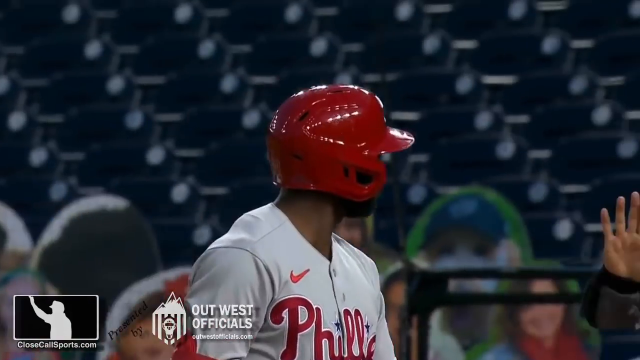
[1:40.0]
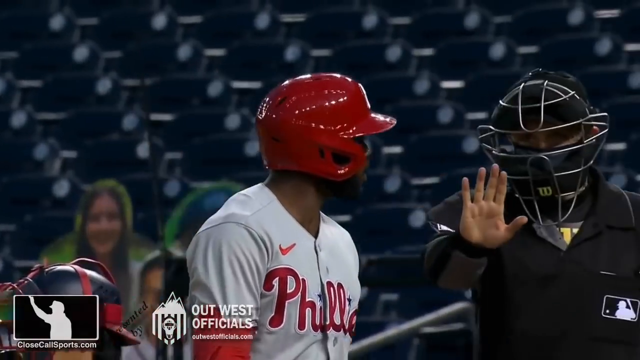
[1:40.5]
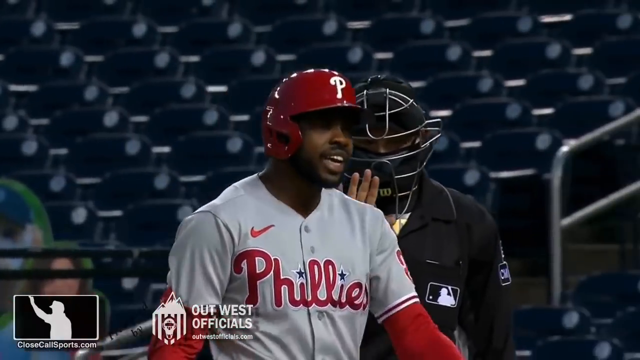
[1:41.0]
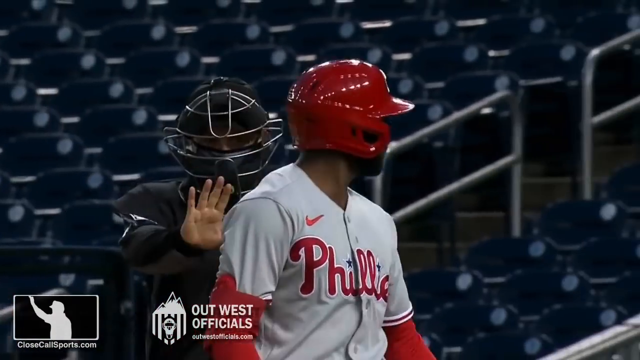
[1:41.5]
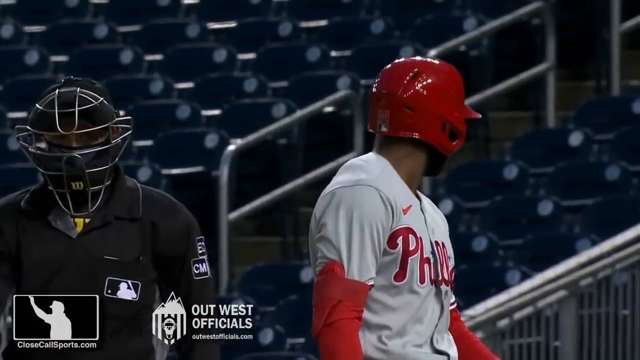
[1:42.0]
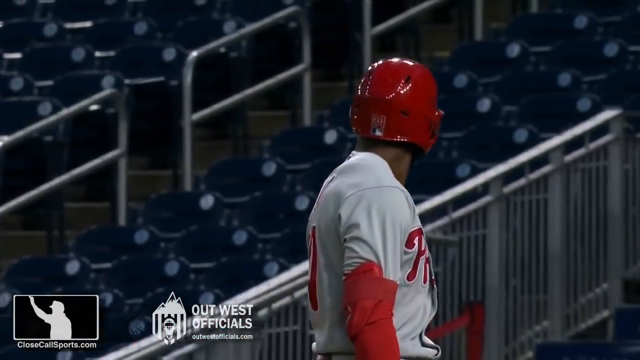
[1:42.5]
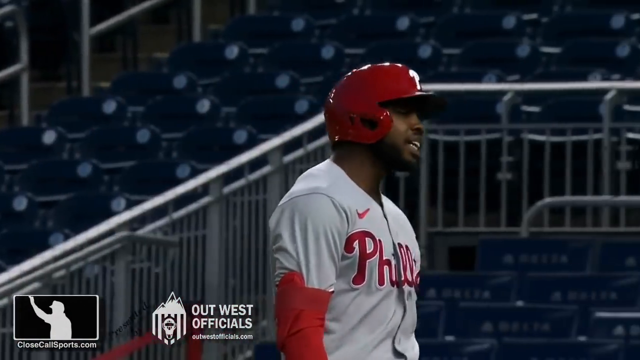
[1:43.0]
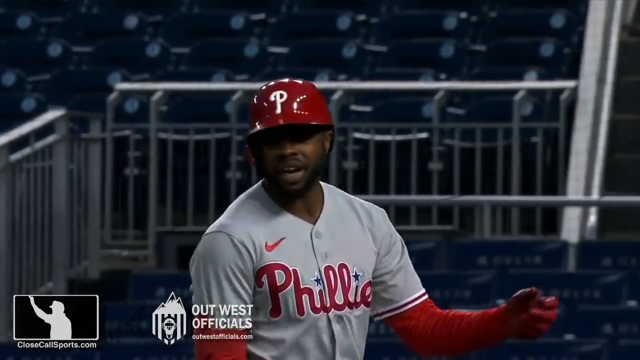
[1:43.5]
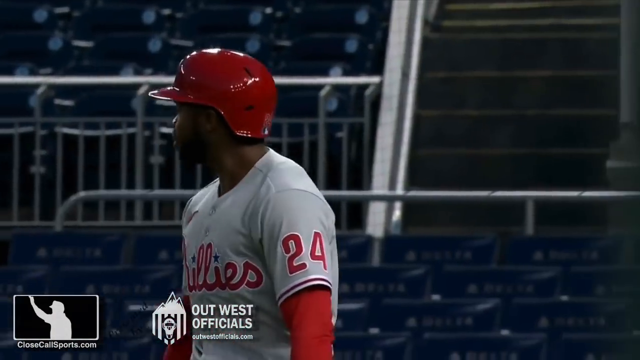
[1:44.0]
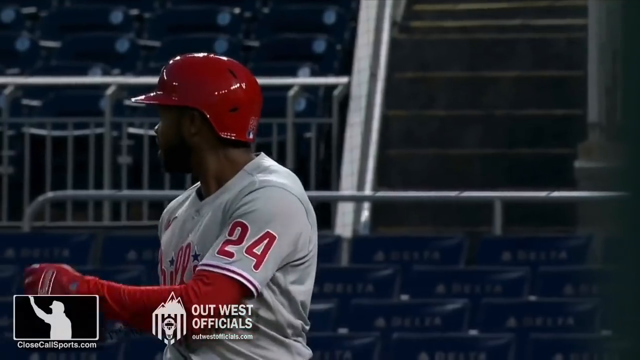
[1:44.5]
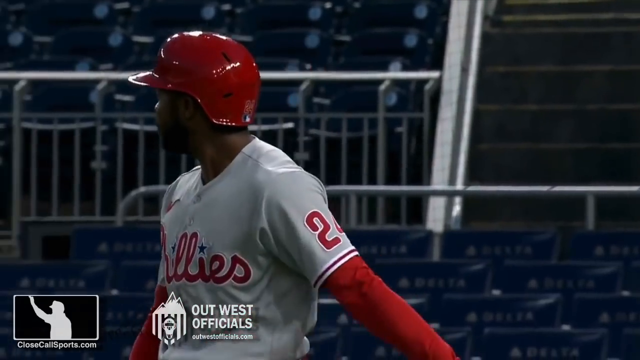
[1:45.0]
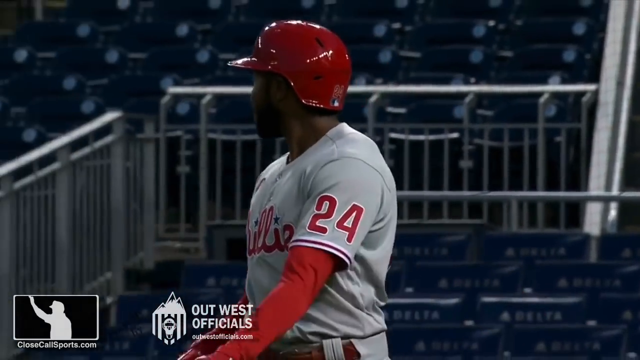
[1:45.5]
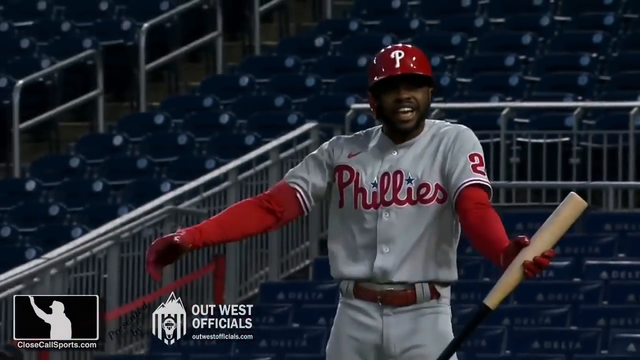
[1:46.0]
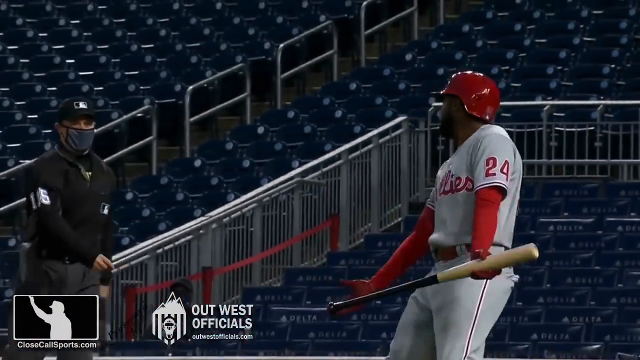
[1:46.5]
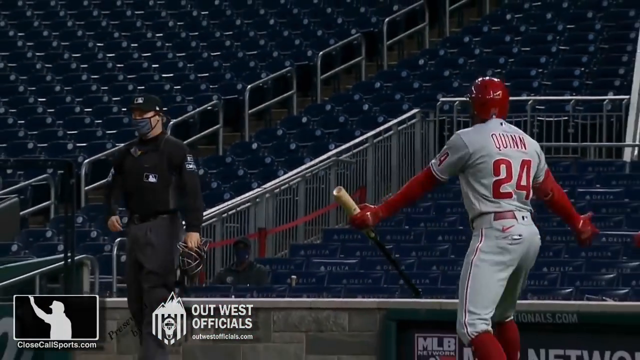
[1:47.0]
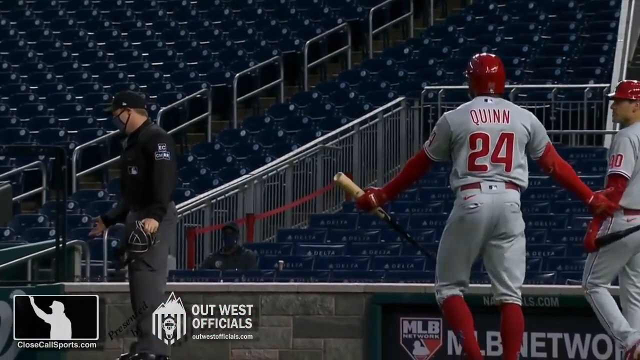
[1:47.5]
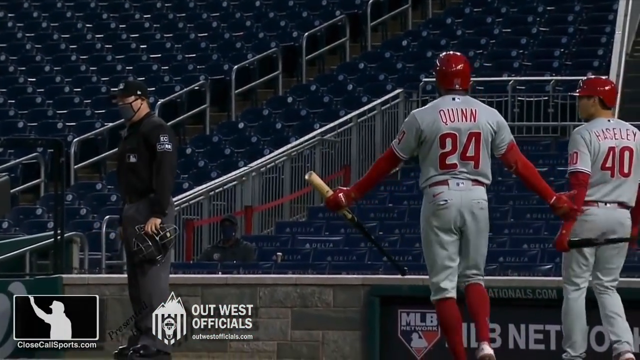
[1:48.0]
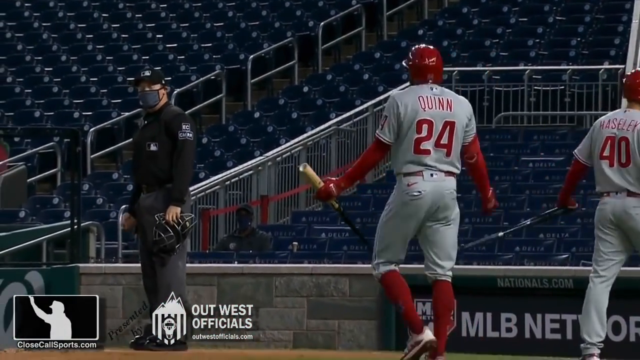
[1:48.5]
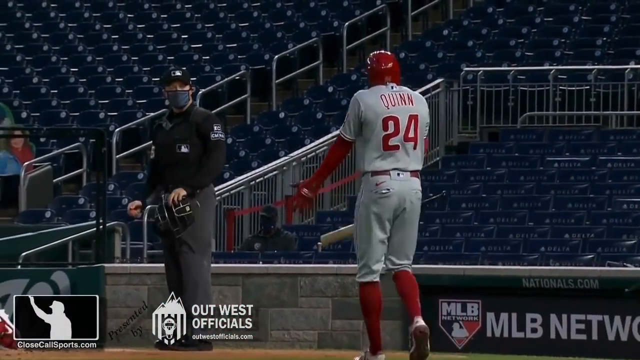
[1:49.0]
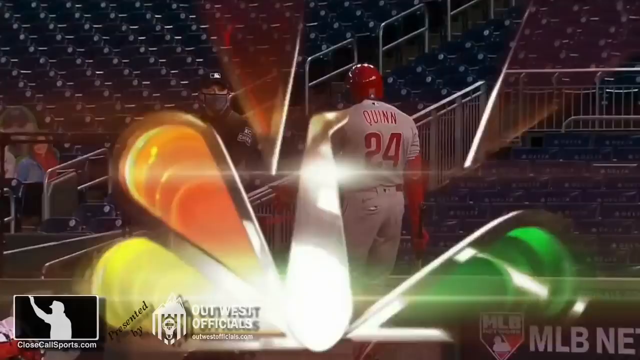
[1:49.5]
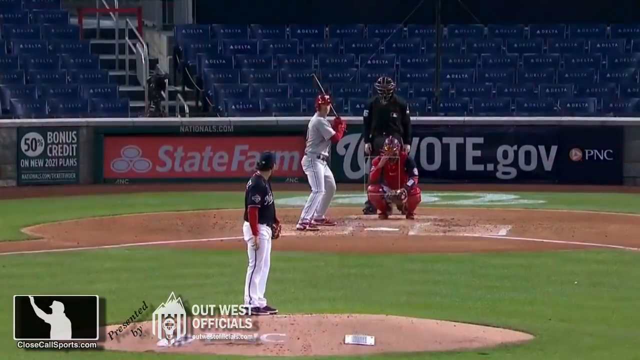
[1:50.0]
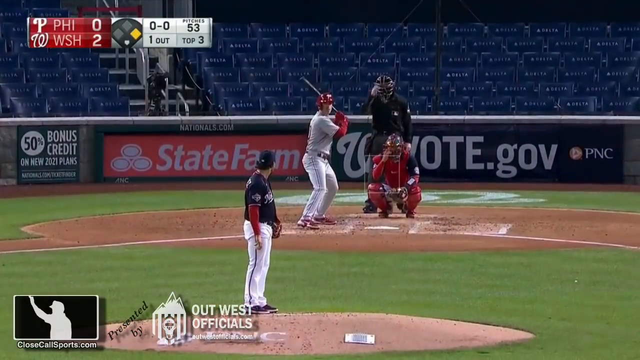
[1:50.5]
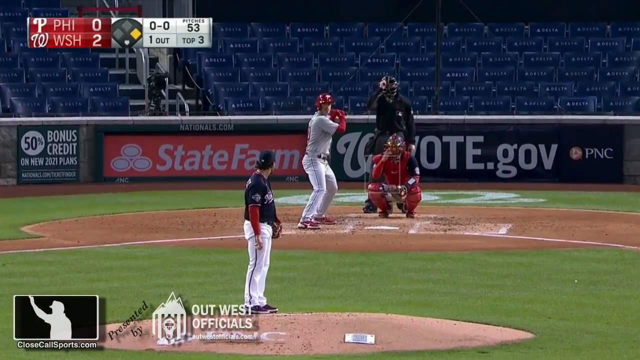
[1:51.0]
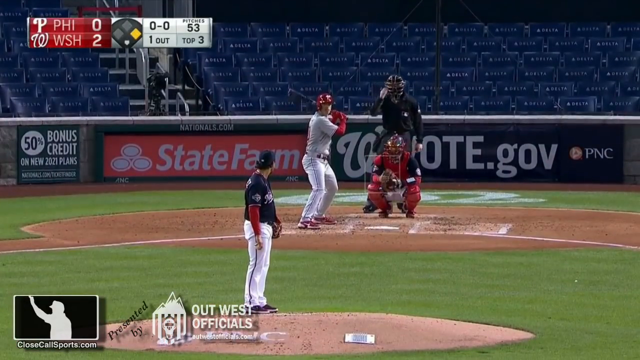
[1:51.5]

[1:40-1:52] A Phillies player walks back but keeps turning around to argue with the umpire about the calls on strikes and balls. He looks rather upset and keeps talking to the umpire, eventually going back toward him as the video cuts to a scene of the batter very upset with the calls.